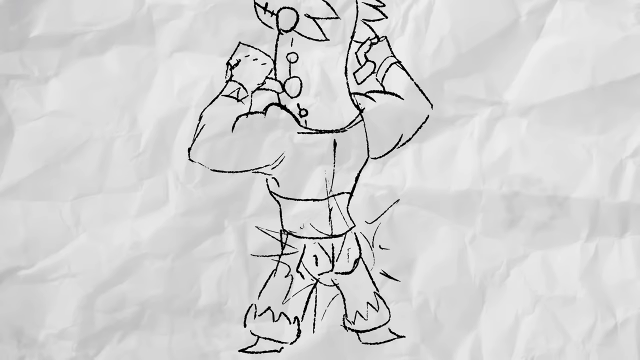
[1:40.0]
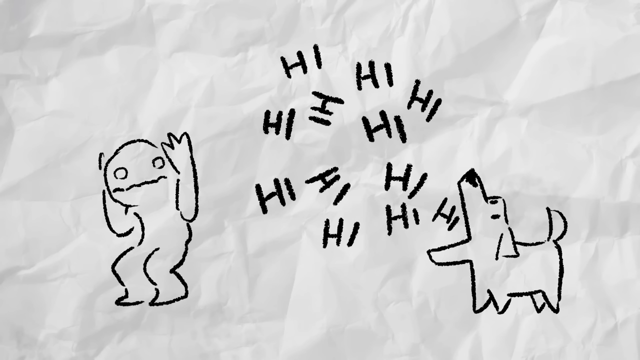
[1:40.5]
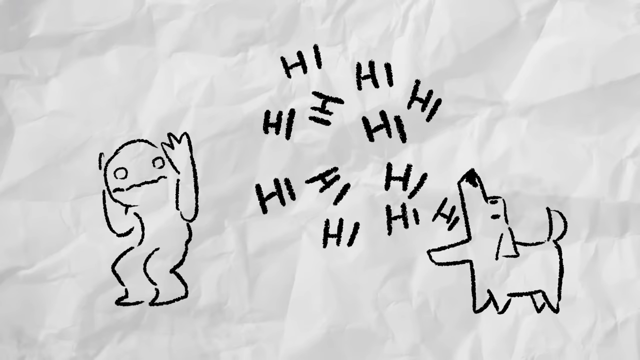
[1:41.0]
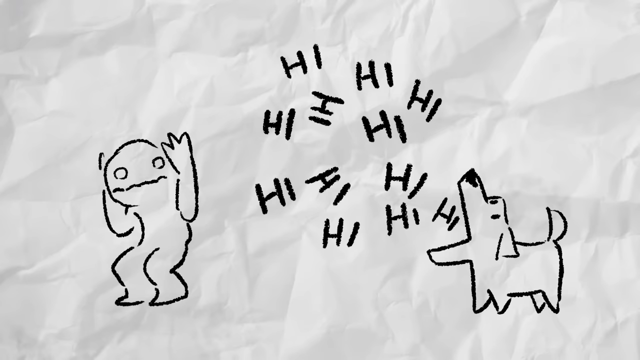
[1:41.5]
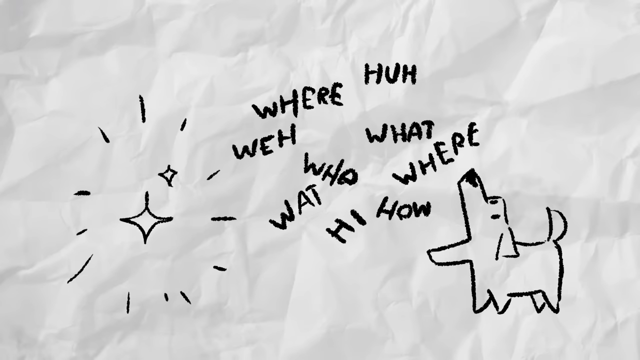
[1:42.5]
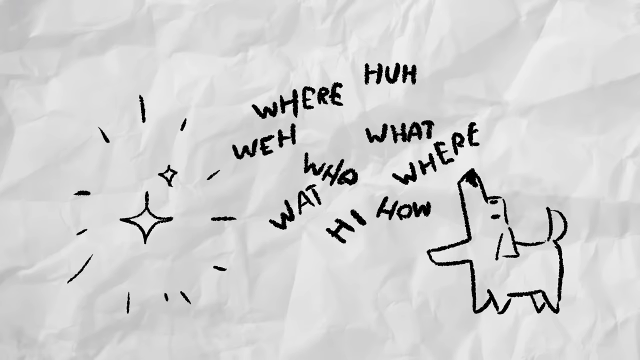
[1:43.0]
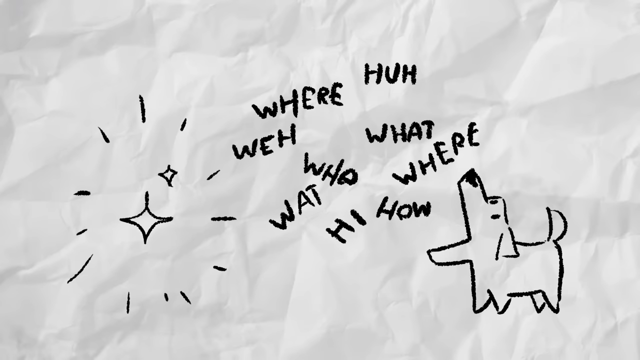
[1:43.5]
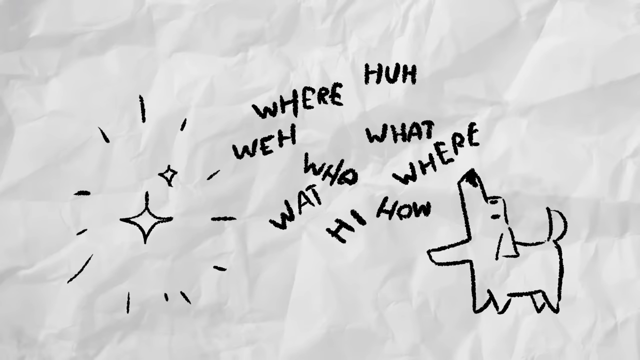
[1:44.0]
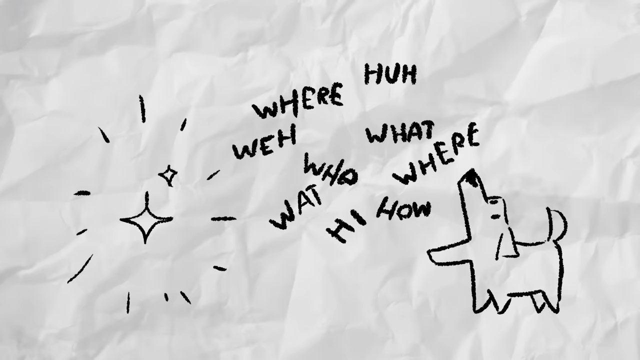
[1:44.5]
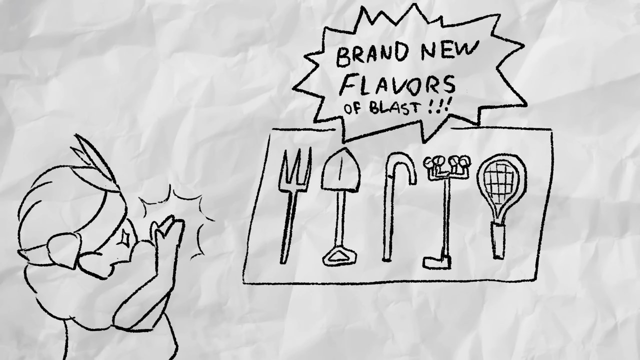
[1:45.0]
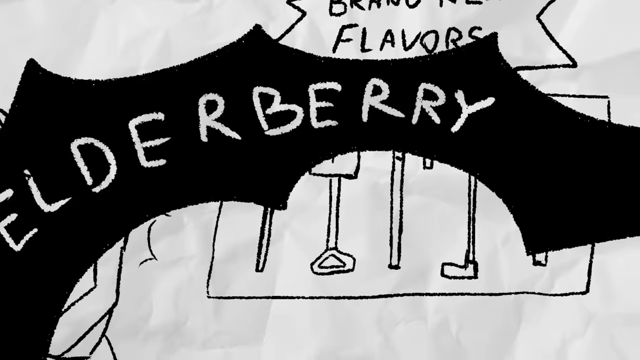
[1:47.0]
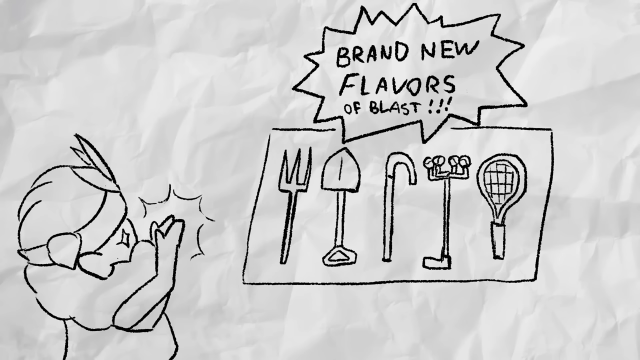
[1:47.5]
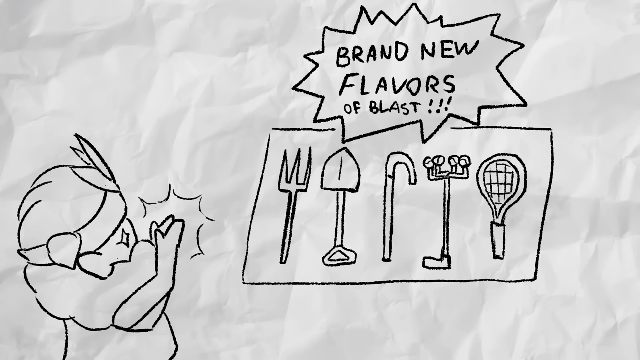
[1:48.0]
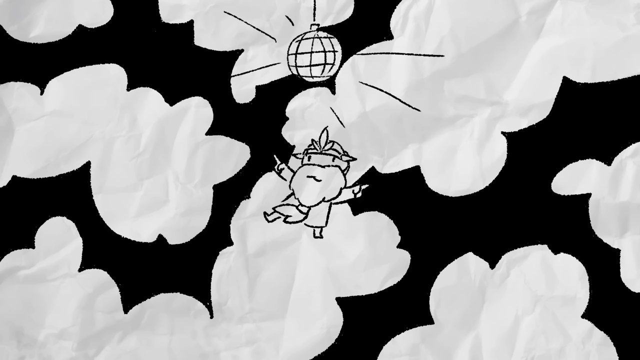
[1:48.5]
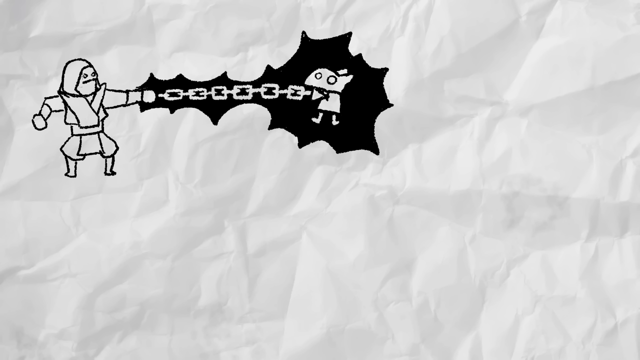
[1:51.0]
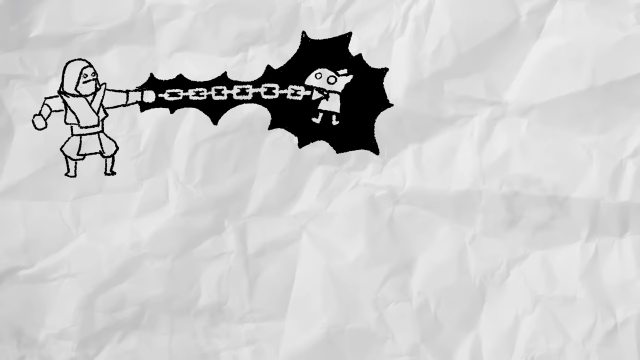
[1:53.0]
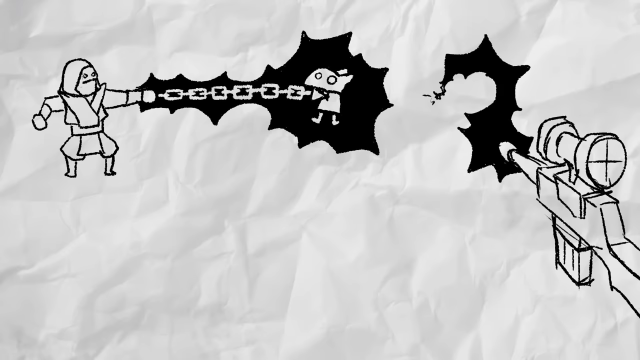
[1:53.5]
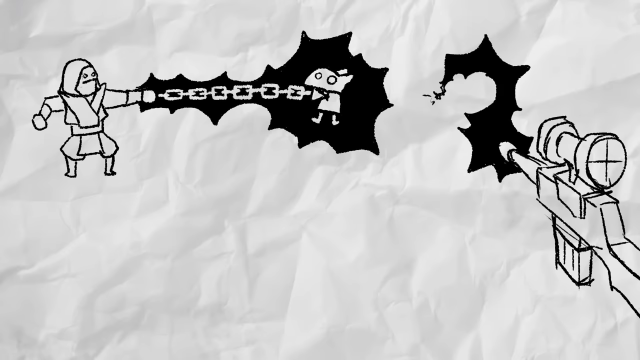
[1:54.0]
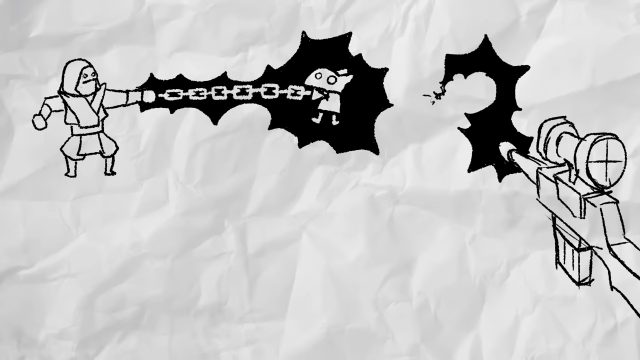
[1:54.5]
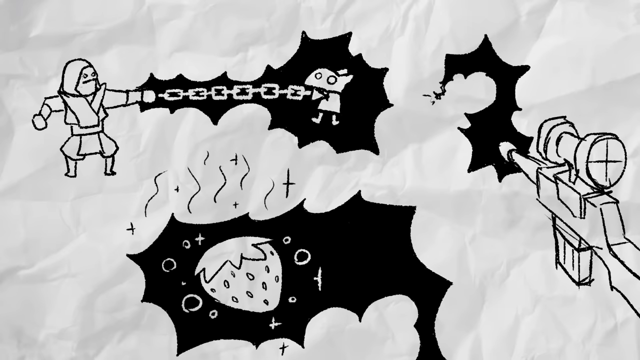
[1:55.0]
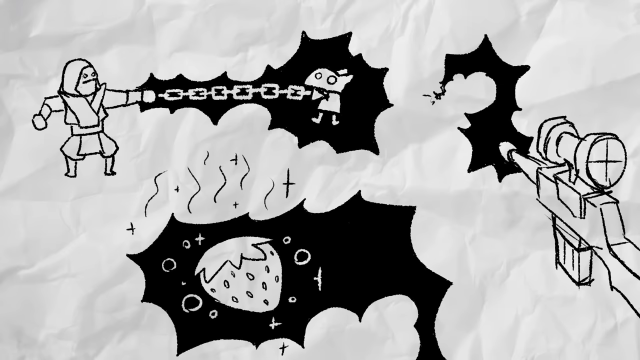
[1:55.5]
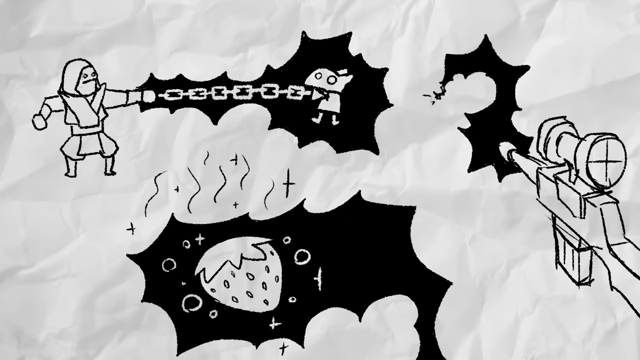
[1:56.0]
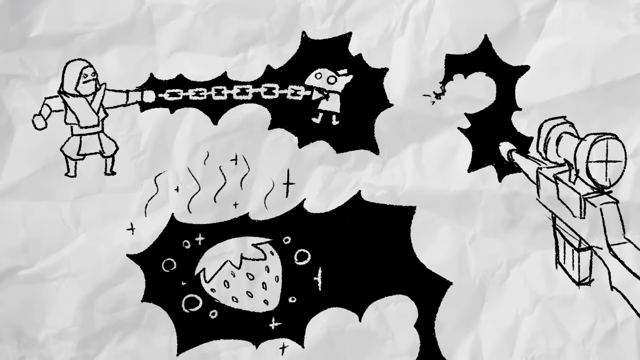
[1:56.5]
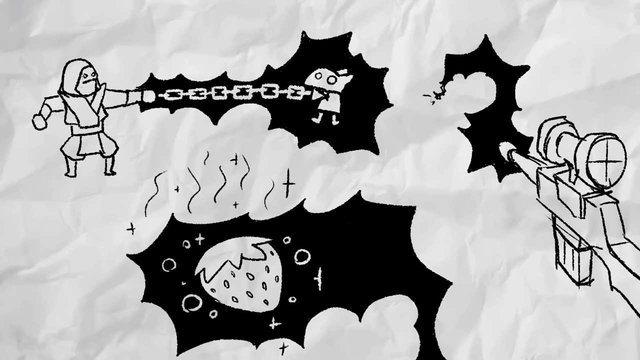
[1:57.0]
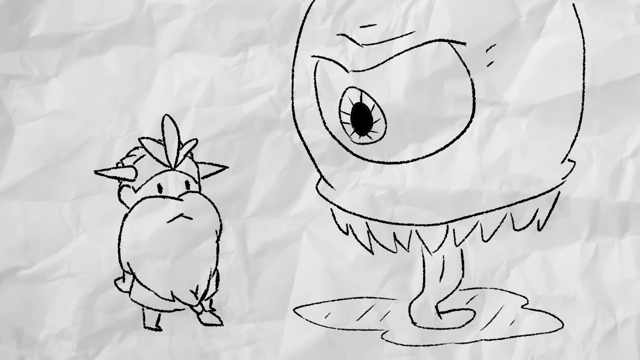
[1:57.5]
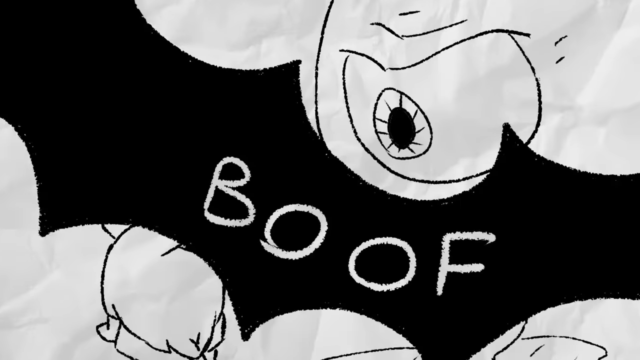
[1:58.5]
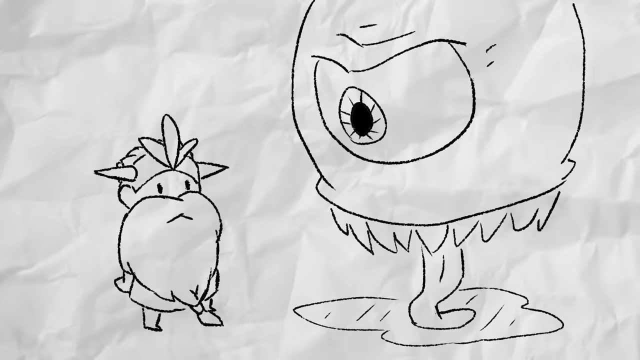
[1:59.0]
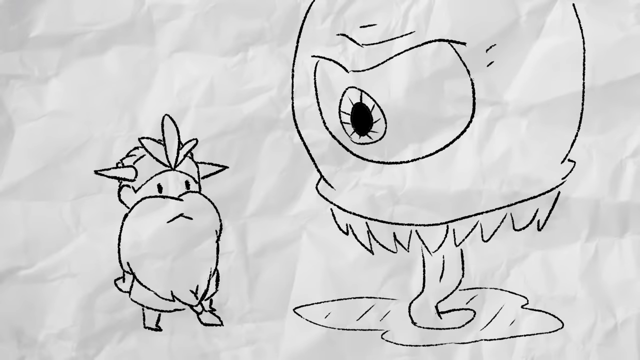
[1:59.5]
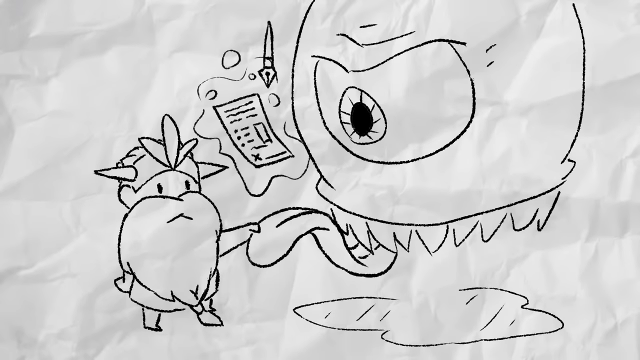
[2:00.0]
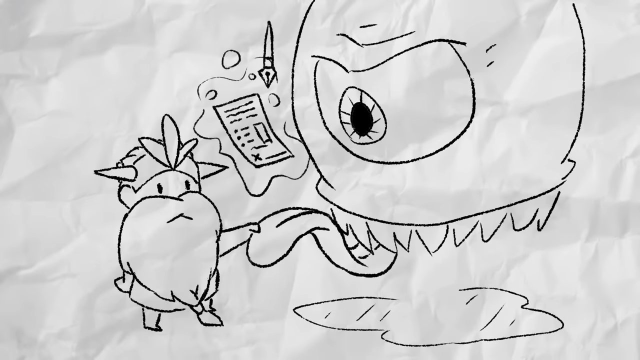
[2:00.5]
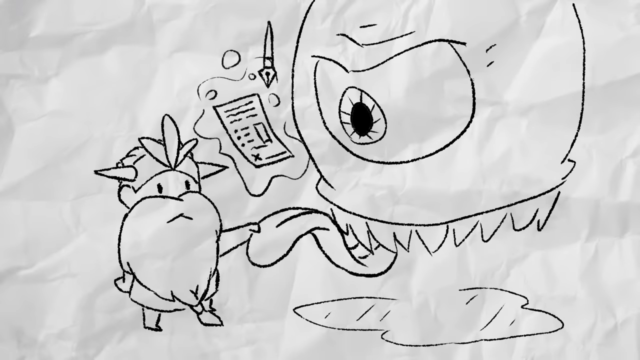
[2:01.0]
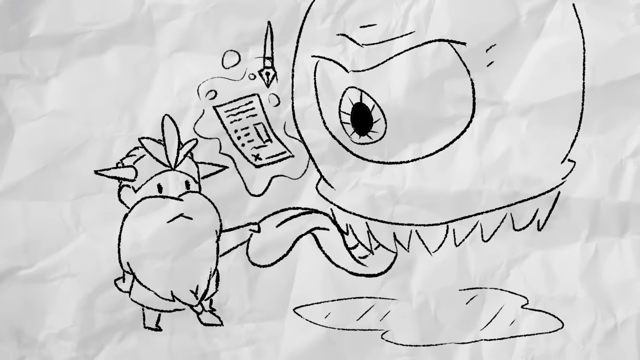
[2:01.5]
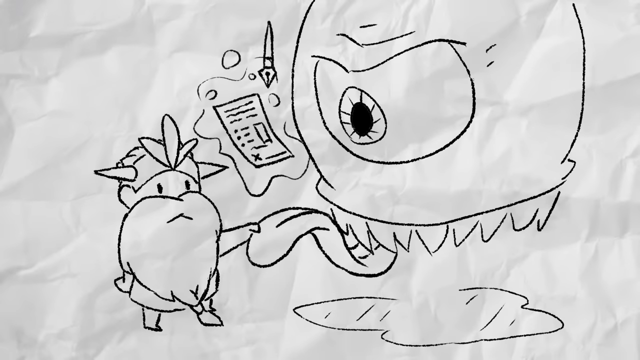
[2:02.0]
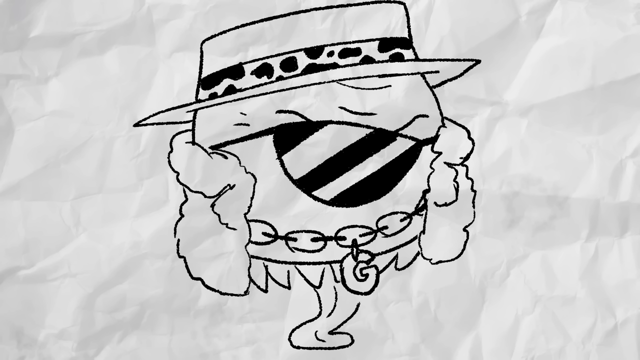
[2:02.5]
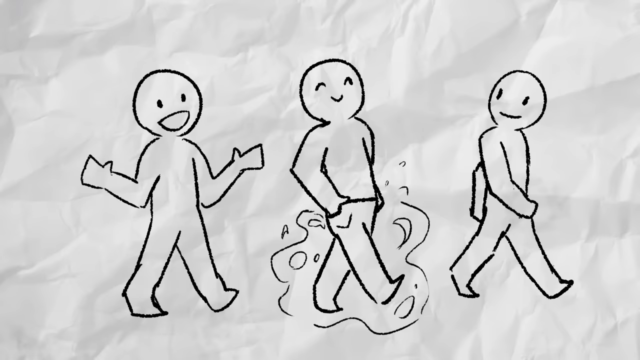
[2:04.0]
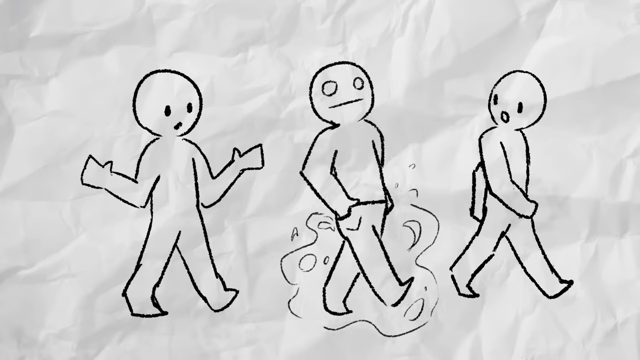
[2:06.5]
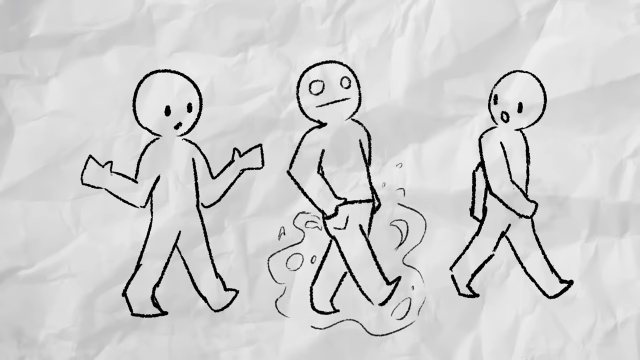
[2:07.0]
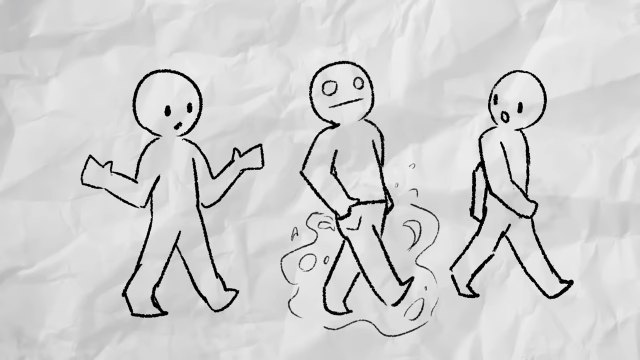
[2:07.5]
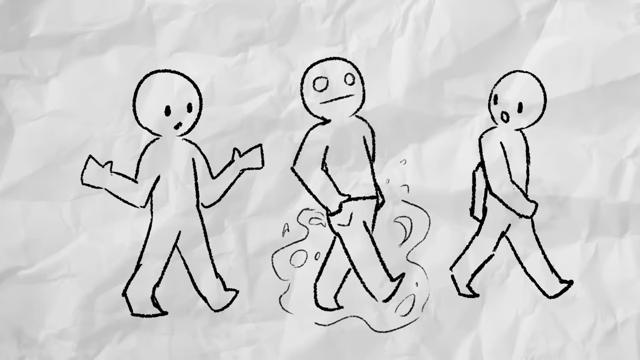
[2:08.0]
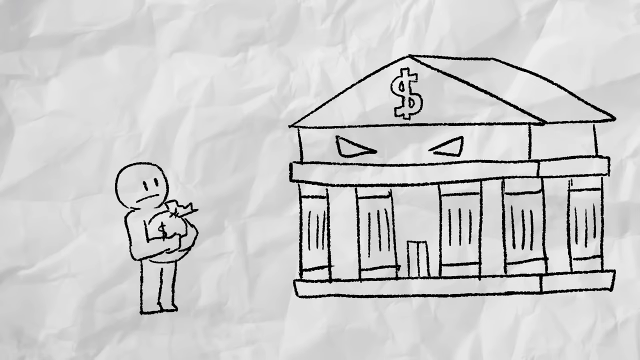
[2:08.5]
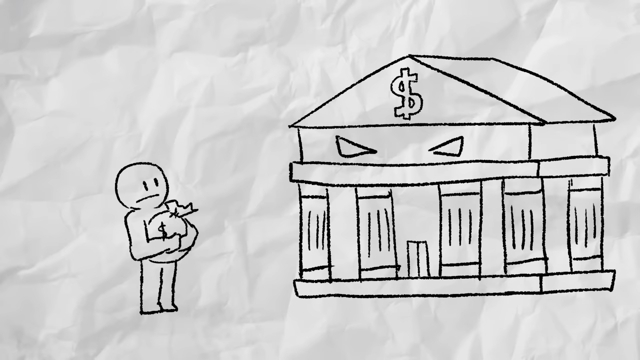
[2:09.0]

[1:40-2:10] The character continues to be shown in different variations. The animation is on crumpled white paper and seems to be hand-drawn in black. A dog says "hi, hi, hi, hi, where you at, where you at, who?", followed by the words "Brand new flavors of blast". The character casts spells in many situations. Other characters use a rifle, some characters have a chain on a dog, and a strawberry appears. The character attacks a giant monster, and the monster seems to be winning. Multiple other characters are drawn in different situations. A person depositing money at a bank looks distressed, while the bank has a text bubble reading "you have to give more".